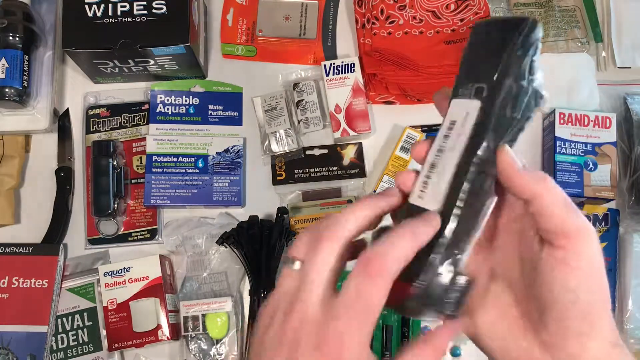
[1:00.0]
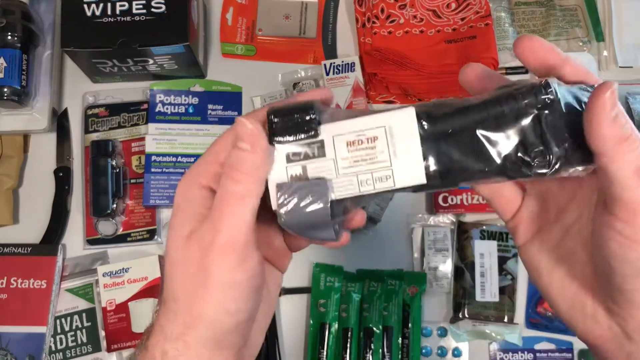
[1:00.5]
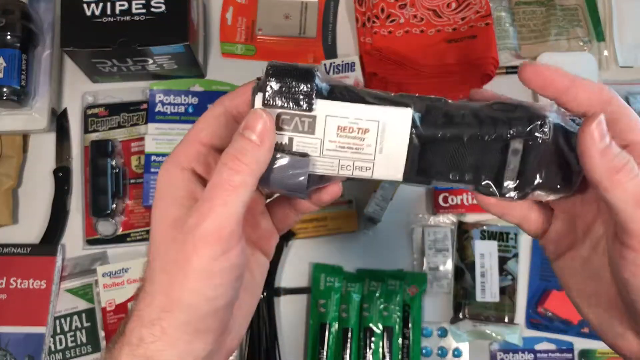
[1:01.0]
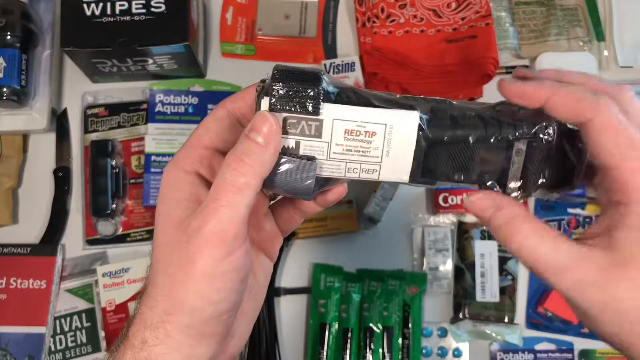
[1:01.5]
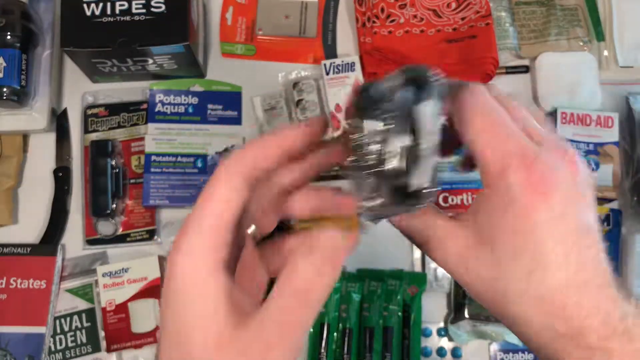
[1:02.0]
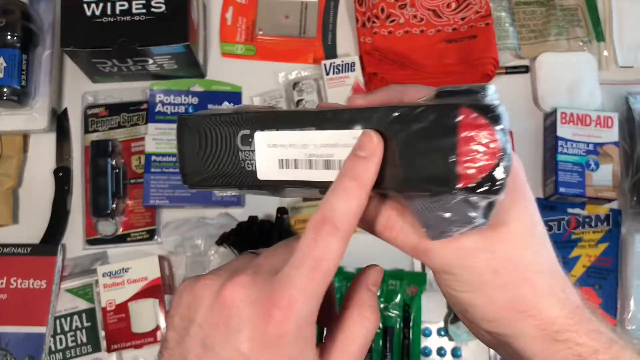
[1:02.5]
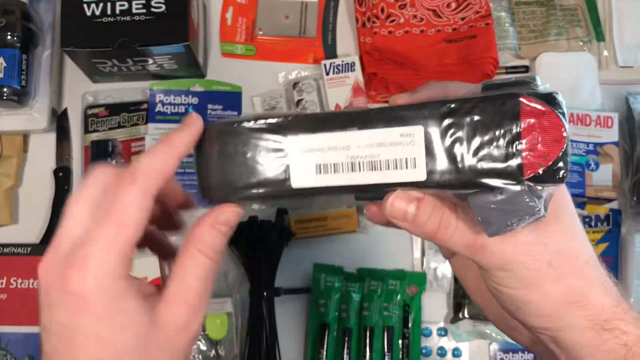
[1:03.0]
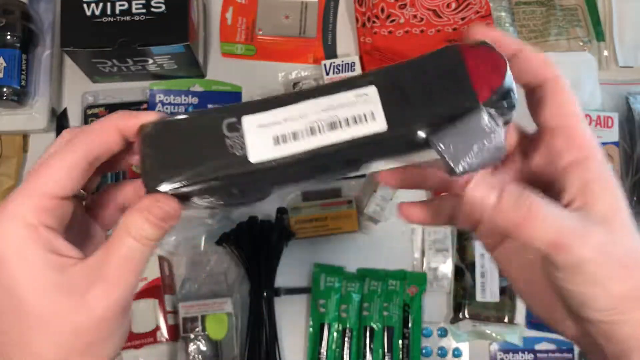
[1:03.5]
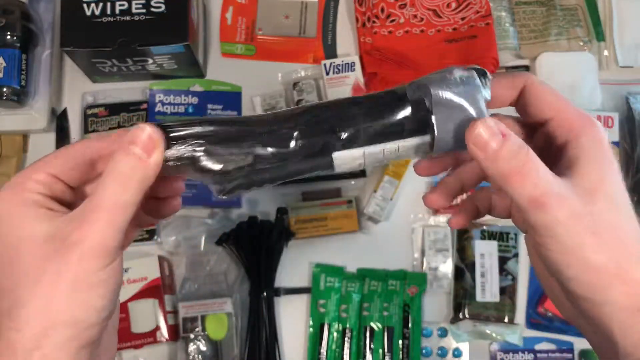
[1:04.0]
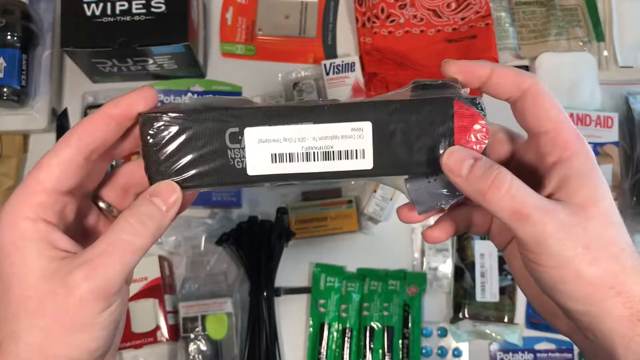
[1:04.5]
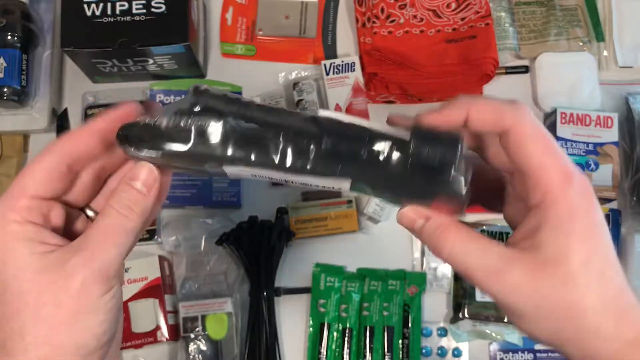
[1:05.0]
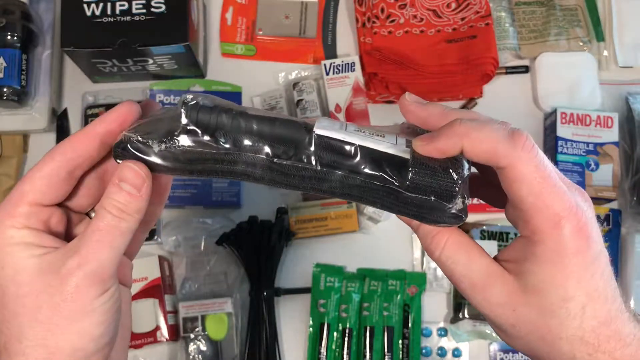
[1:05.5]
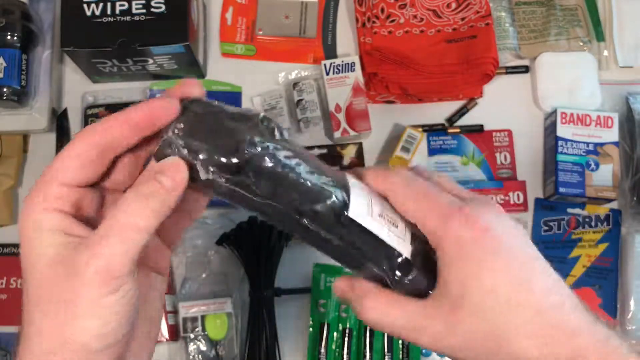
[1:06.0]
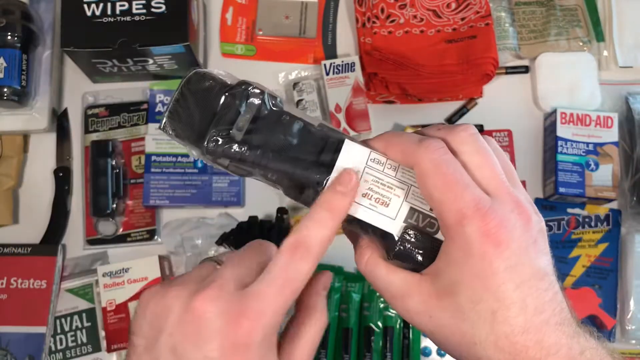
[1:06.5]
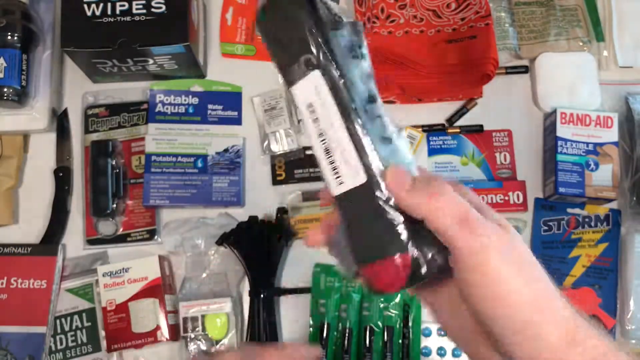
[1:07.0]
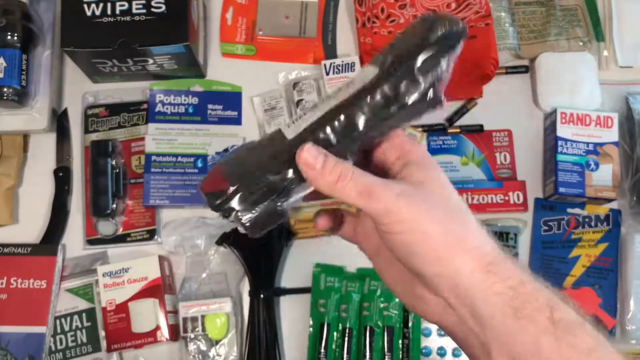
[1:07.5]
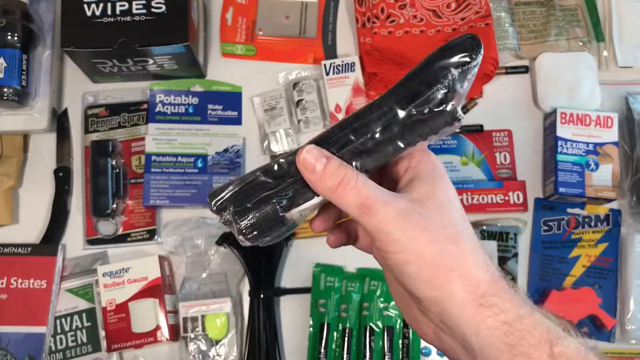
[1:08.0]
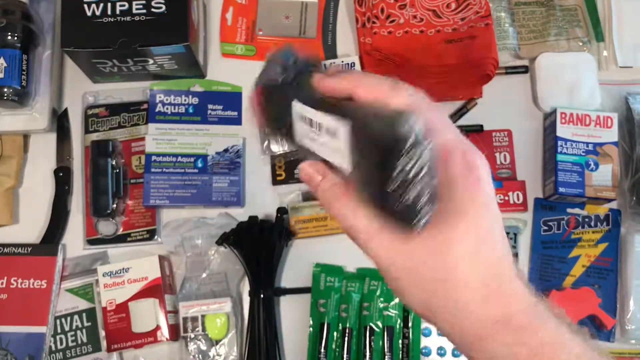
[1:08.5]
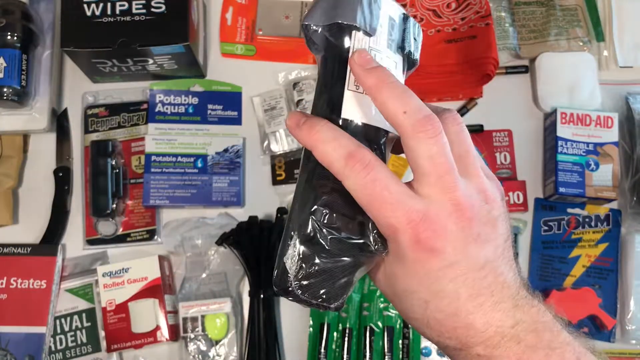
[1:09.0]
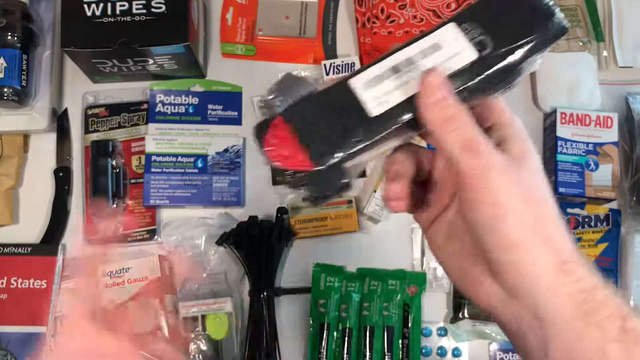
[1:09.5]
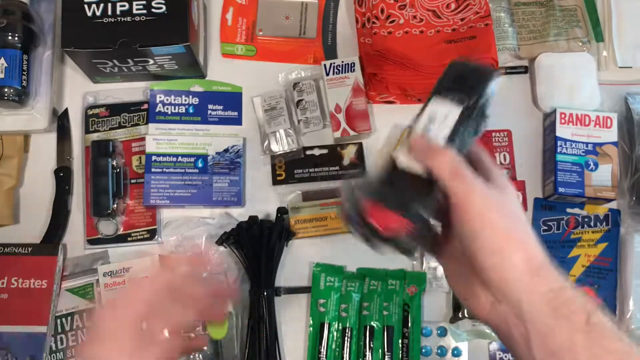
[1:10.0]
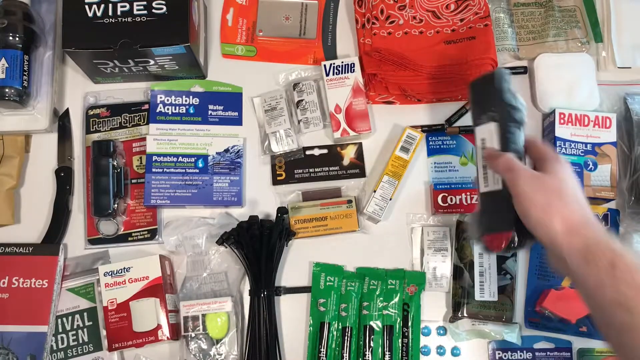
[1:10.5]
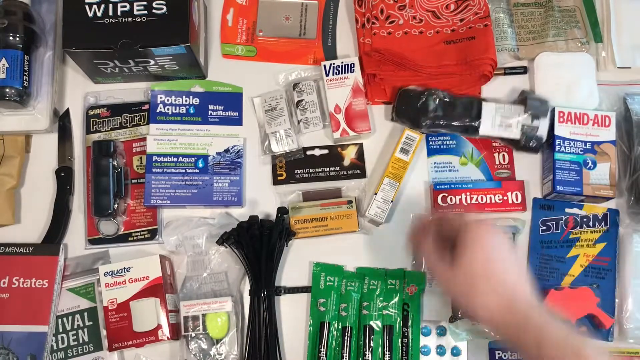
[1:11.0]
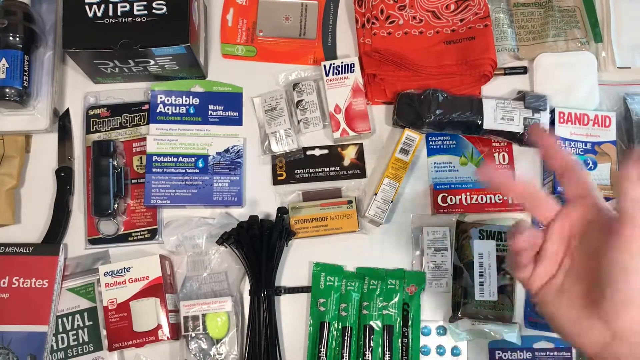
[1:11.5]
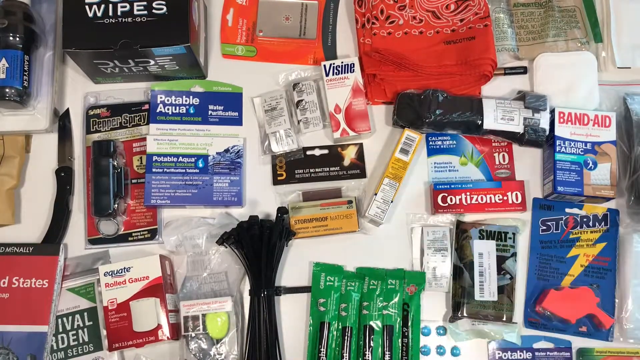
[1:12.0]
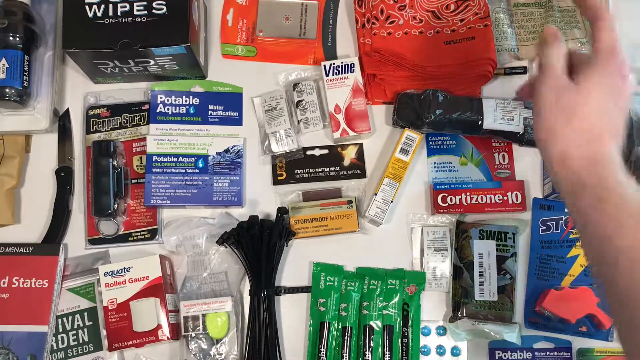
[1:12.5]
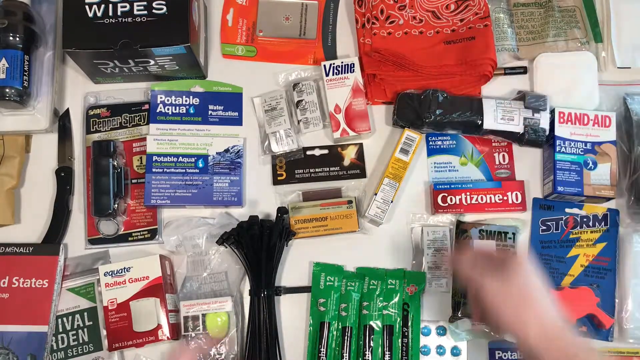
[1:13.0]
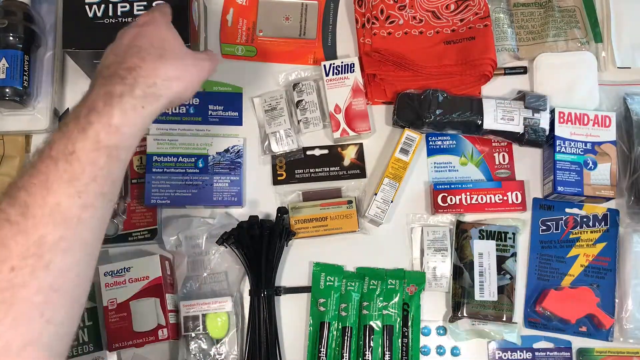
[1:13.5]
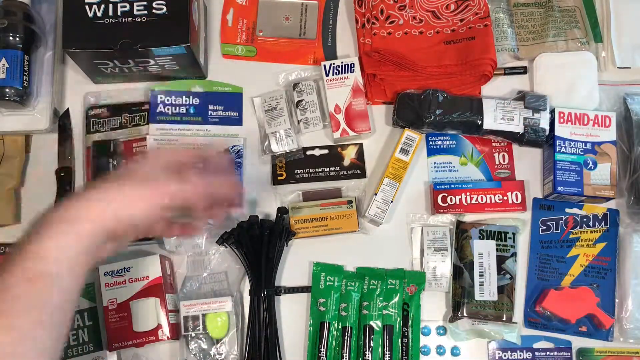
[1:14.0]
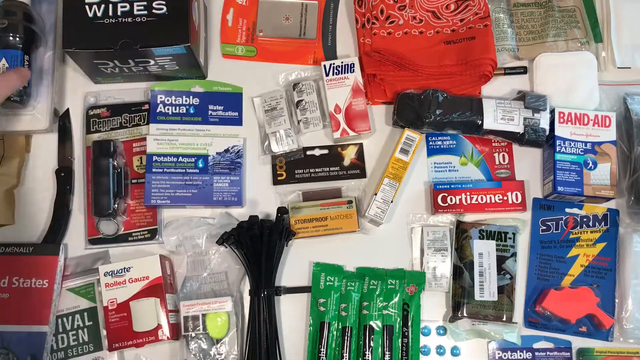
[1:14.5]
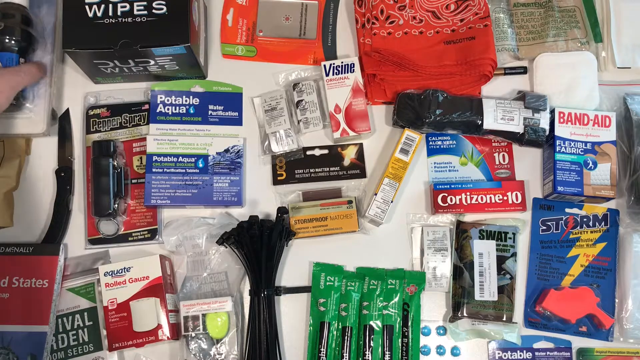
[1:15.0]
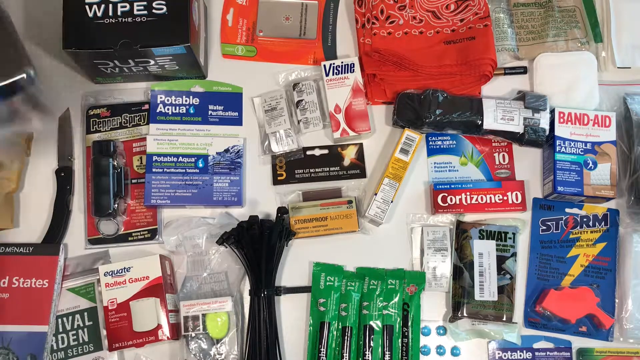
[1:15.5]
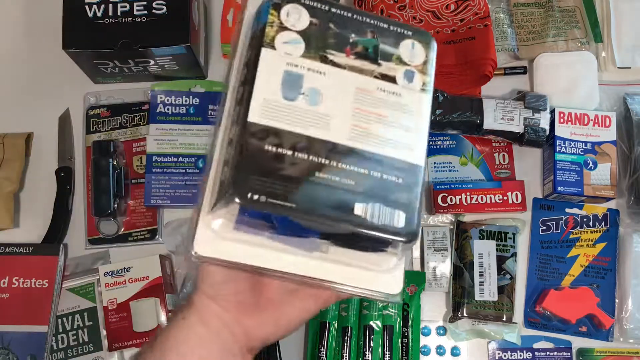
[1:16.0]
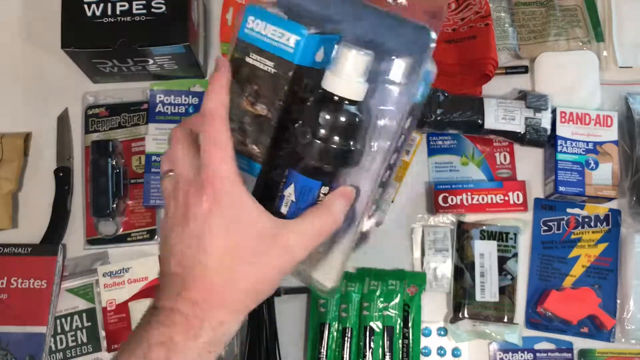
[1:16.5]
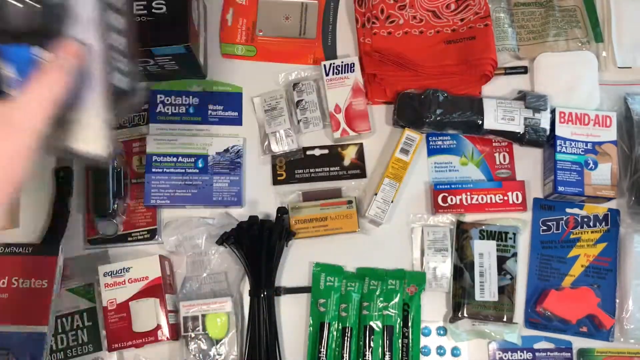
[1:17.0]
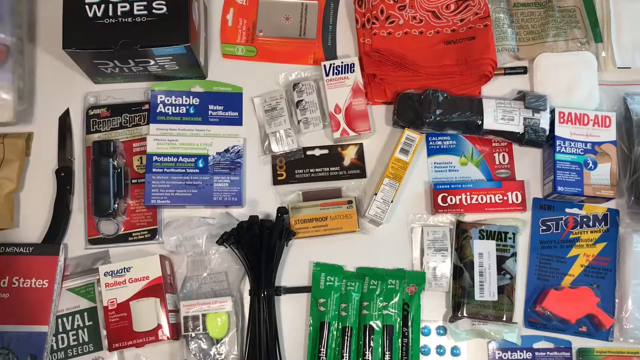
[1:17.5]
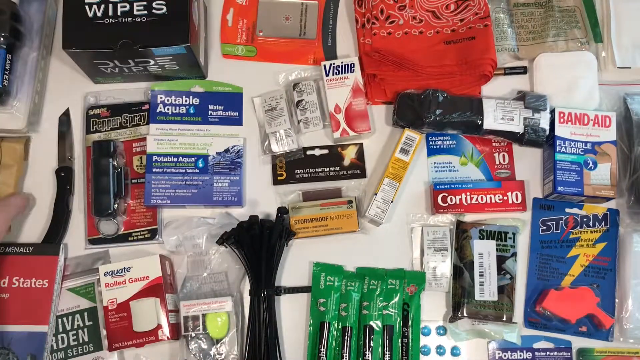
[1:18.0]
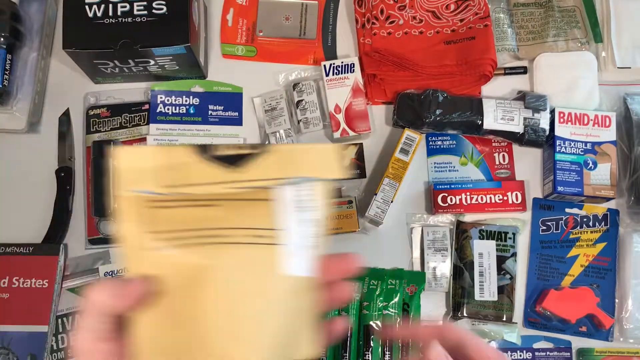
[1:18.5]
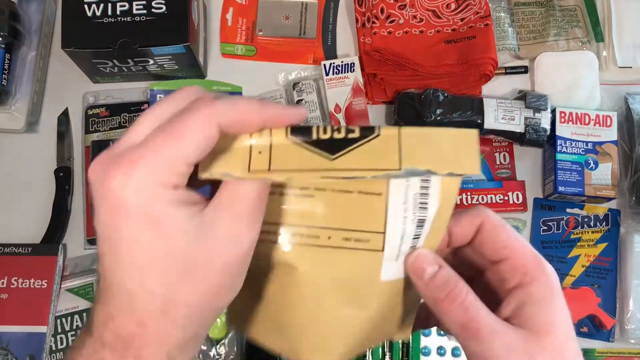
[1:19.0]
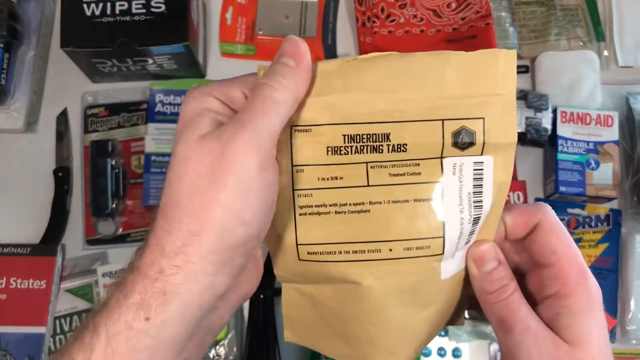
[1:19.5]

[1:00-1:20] Several health care products in their original packaging lie on a white table. A pair of white Caucasian hands, with a wedding band on the left hand, has picked up one of the products from the table and is showing a close-up of it to the camera; the hands enter the frame at the bottom right corner, and it is not possible to tell exactly what the product is. The hands pick up a product from the top left corner of the screen and briefly wave it in front of the camera for a second or two. They then pick up a package of fire starting tabs, one of the few things on the table that does not appear to be a health care product. At the end, the hands appear once again from the bottom right of the screen holding one of the health care products, whose label is not easy to recognize.